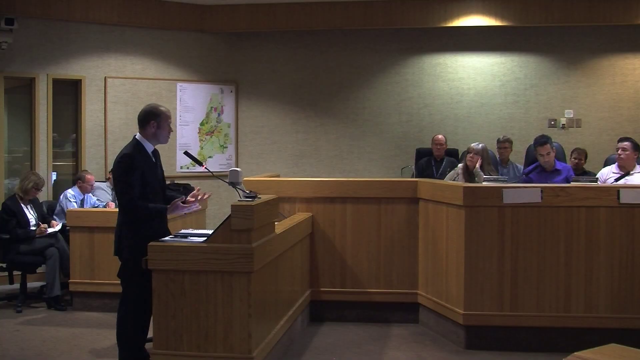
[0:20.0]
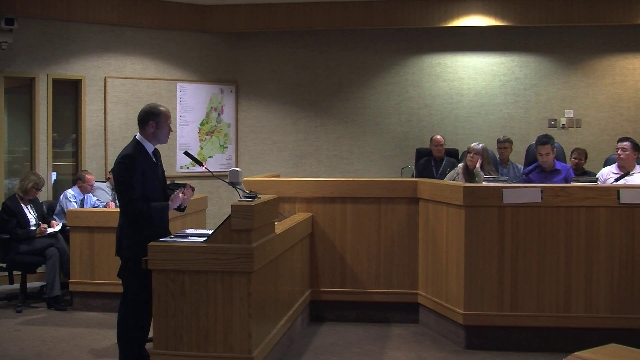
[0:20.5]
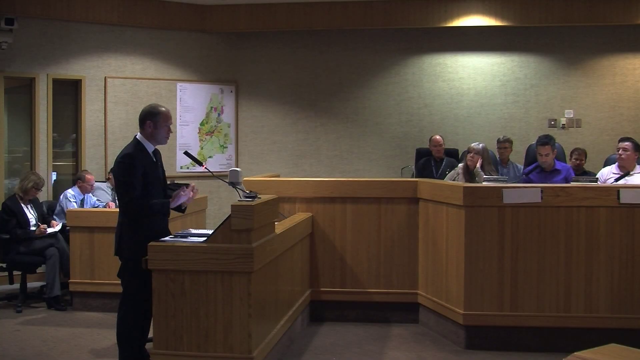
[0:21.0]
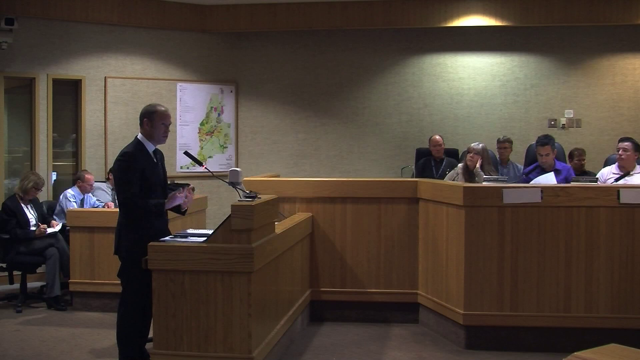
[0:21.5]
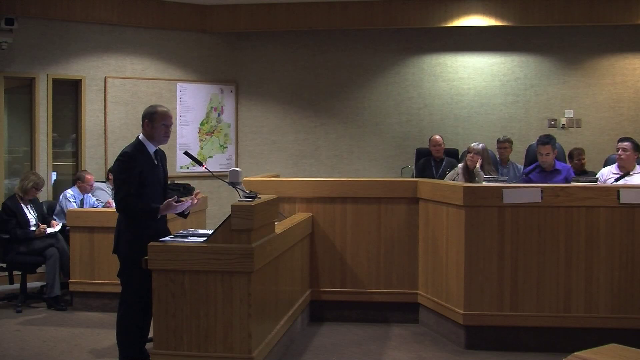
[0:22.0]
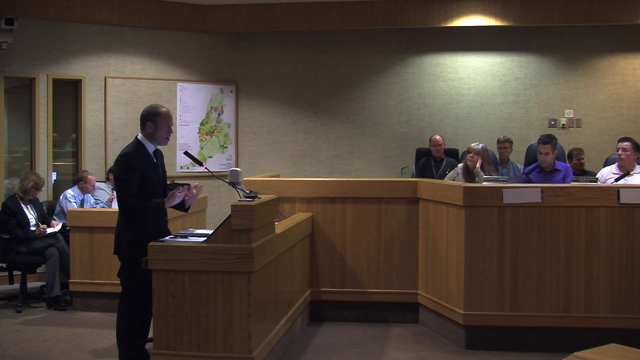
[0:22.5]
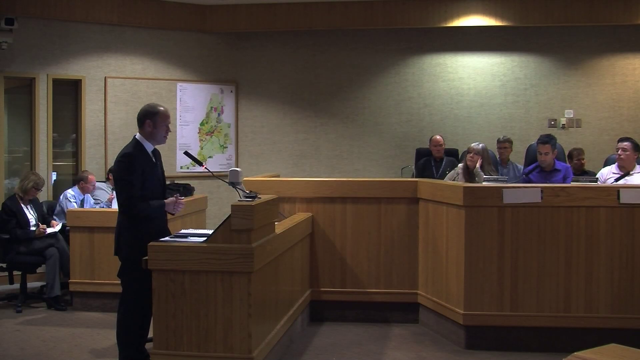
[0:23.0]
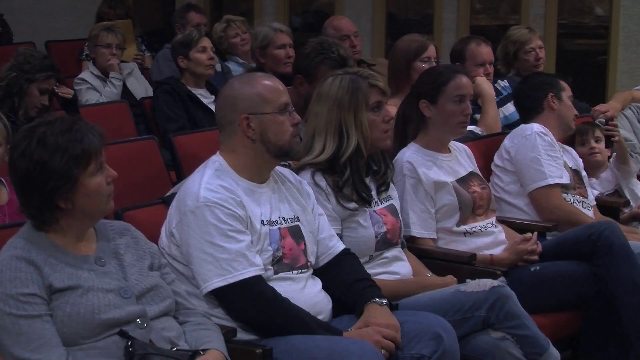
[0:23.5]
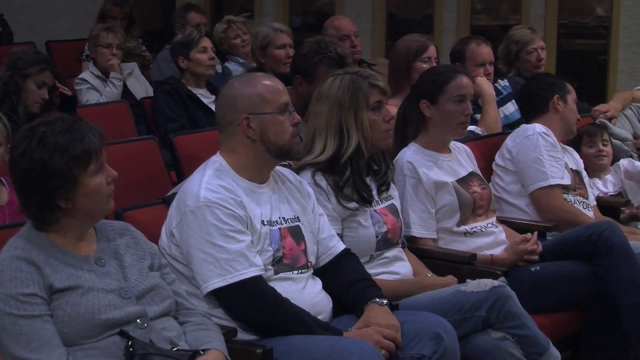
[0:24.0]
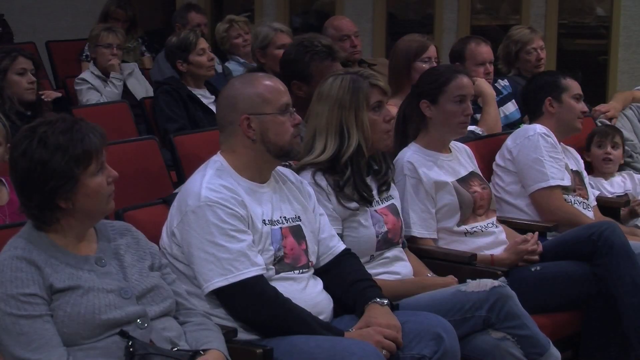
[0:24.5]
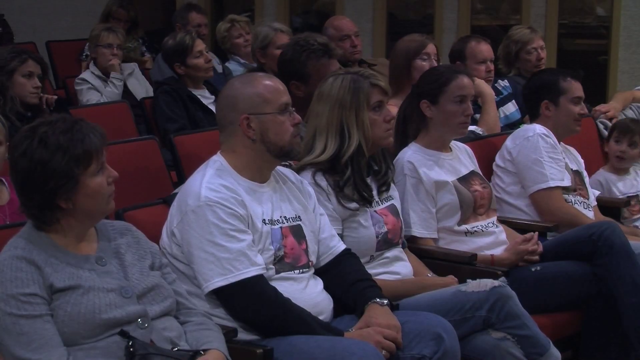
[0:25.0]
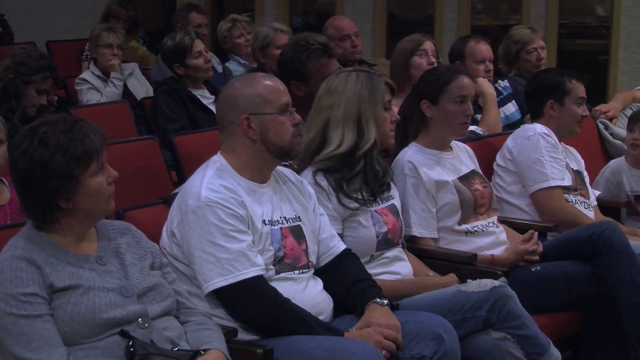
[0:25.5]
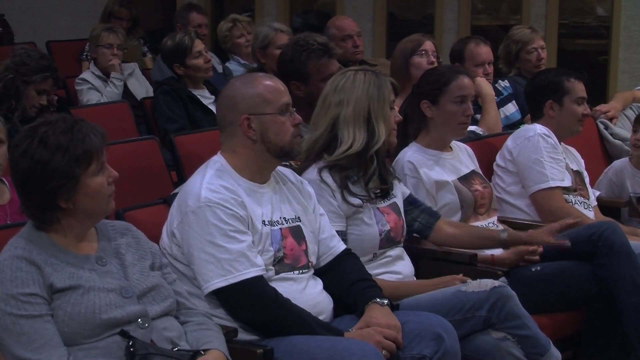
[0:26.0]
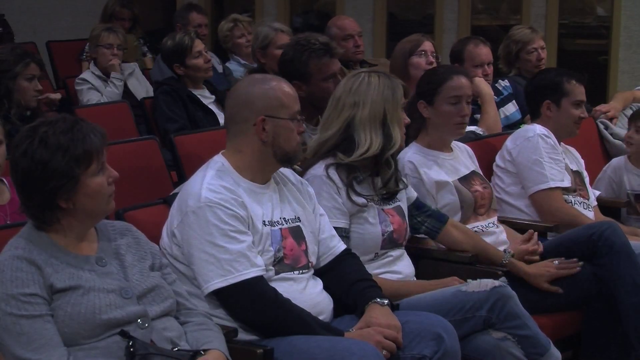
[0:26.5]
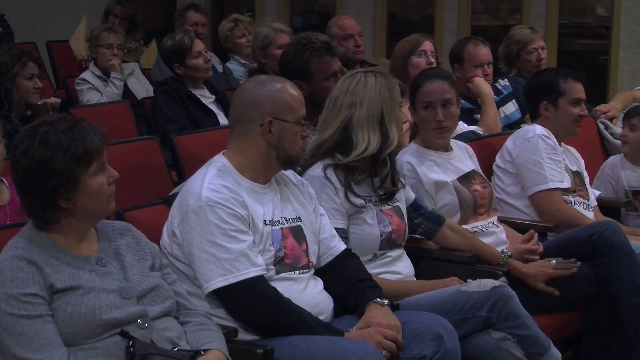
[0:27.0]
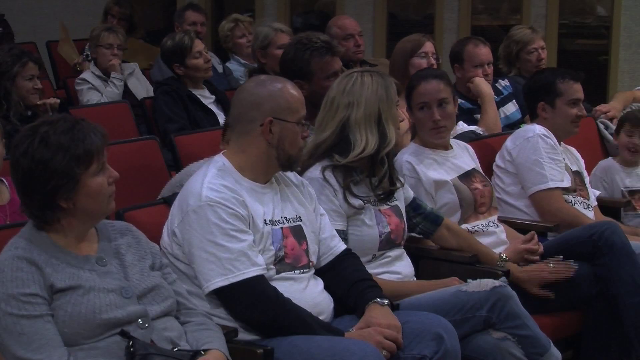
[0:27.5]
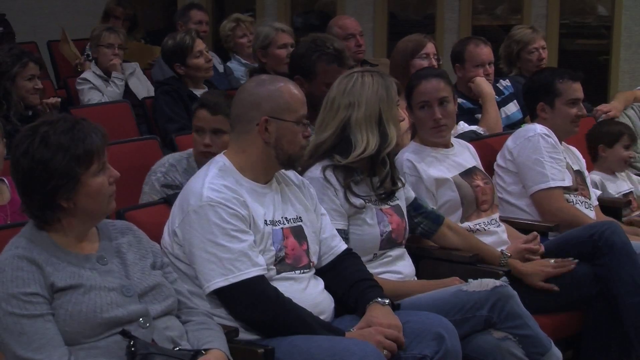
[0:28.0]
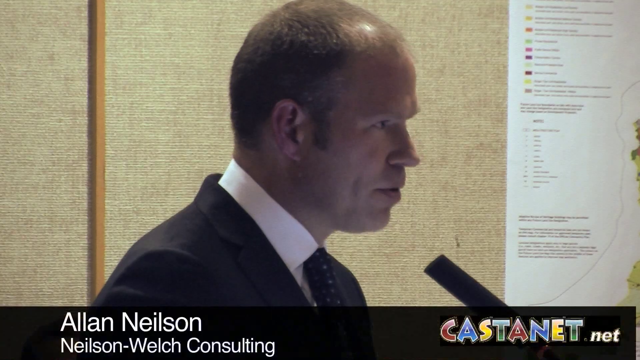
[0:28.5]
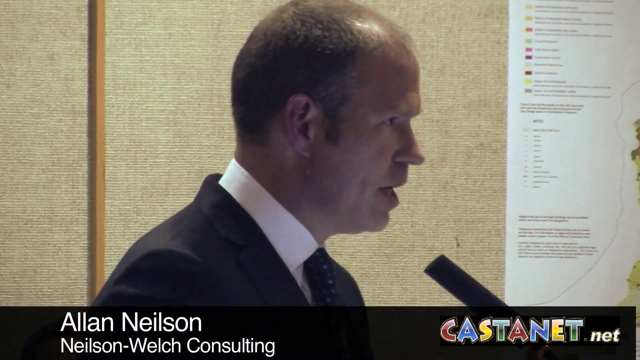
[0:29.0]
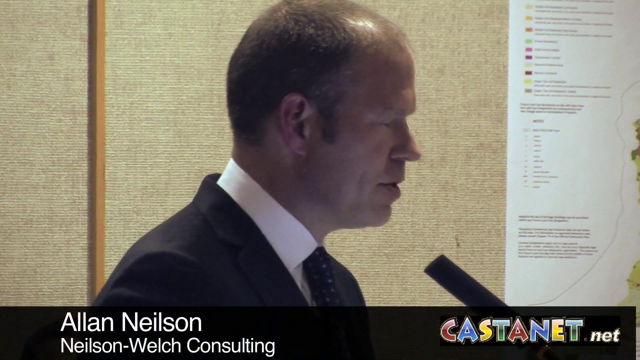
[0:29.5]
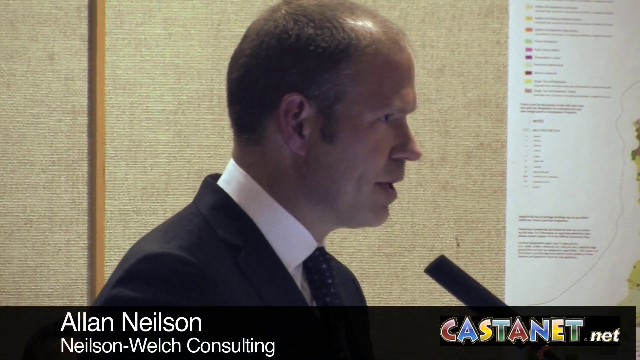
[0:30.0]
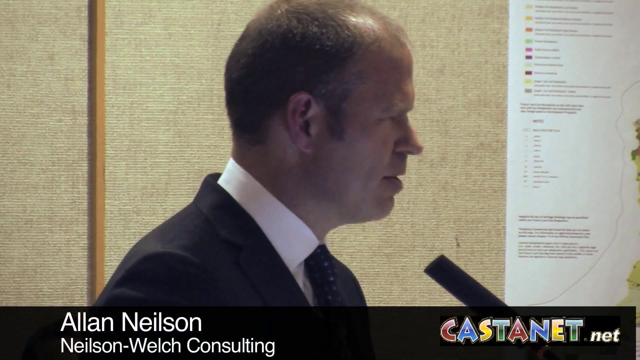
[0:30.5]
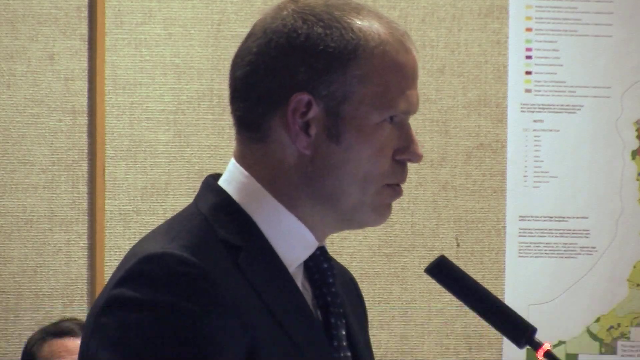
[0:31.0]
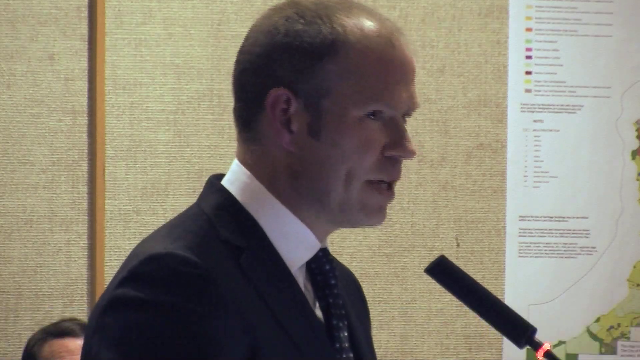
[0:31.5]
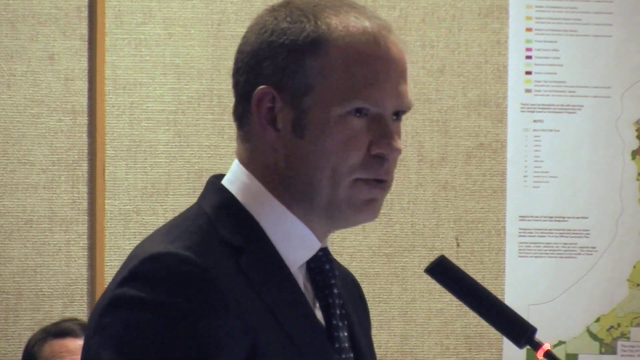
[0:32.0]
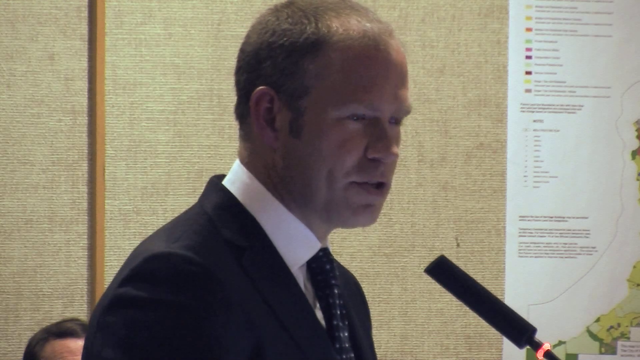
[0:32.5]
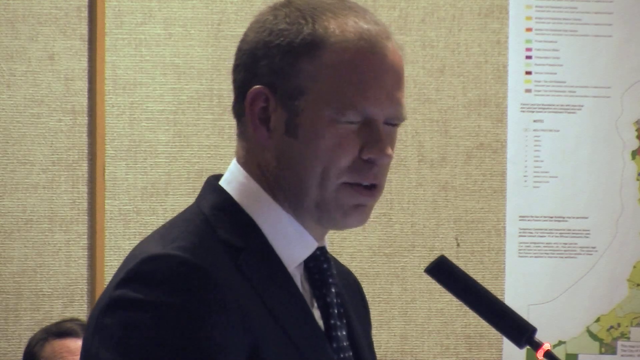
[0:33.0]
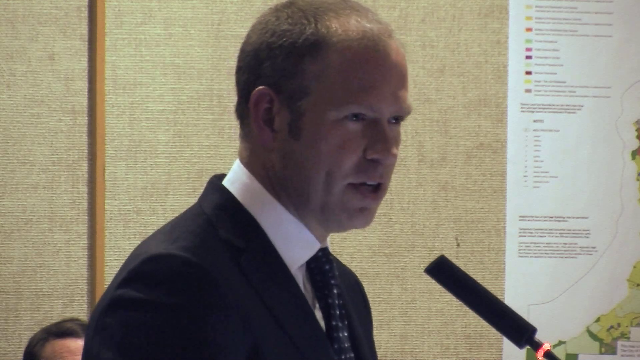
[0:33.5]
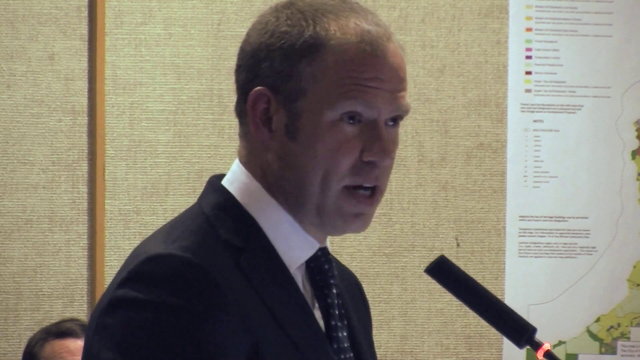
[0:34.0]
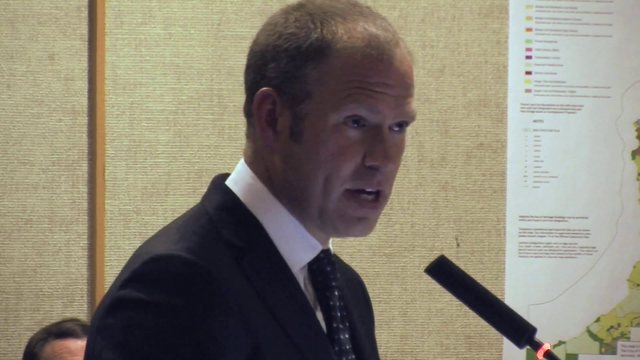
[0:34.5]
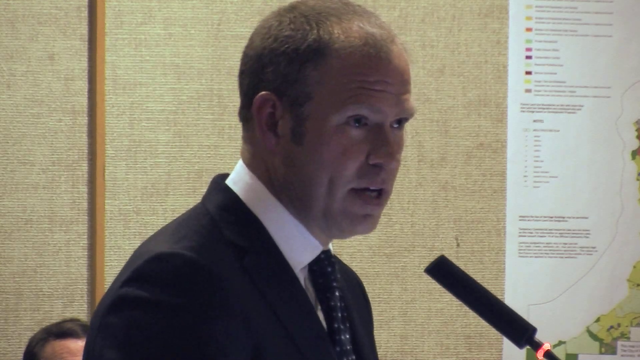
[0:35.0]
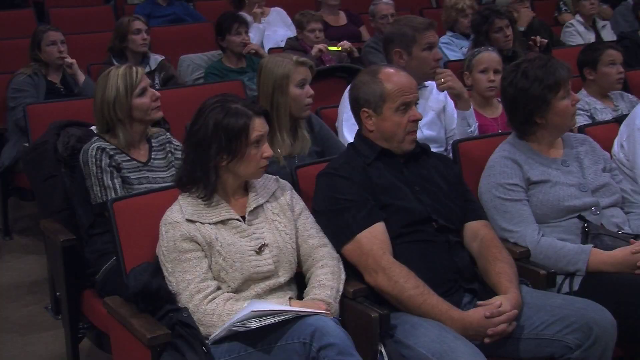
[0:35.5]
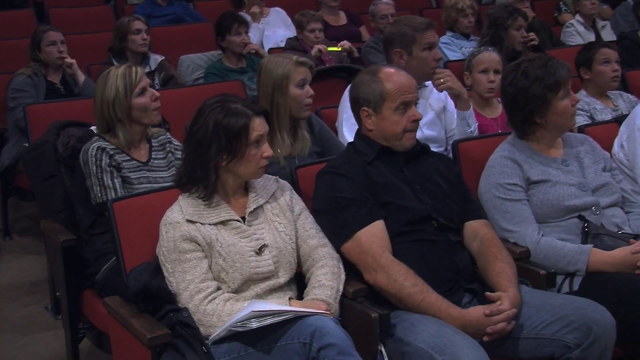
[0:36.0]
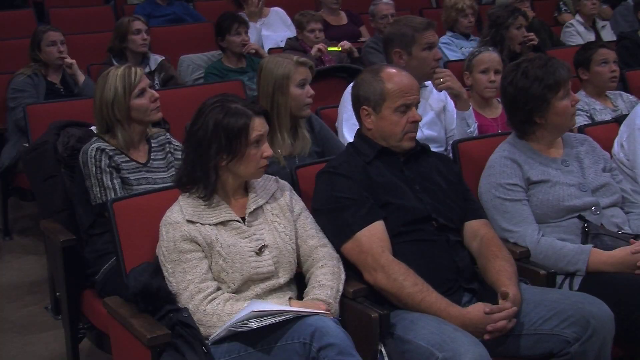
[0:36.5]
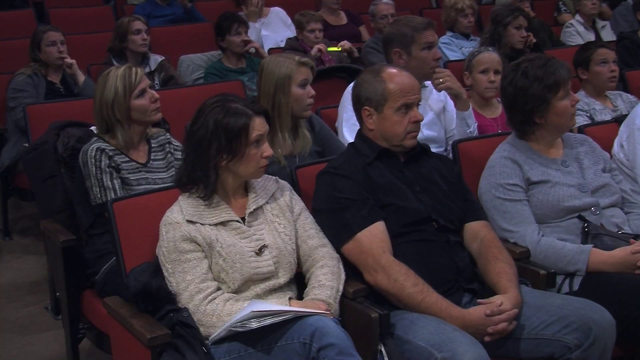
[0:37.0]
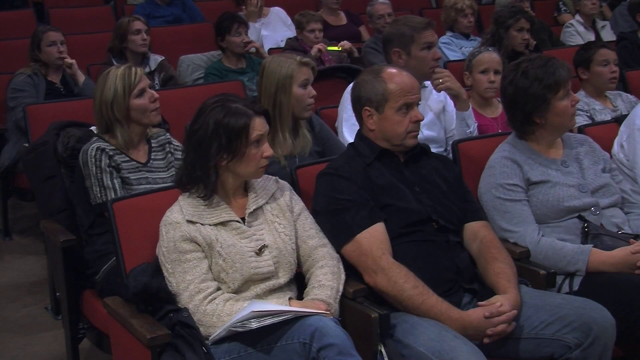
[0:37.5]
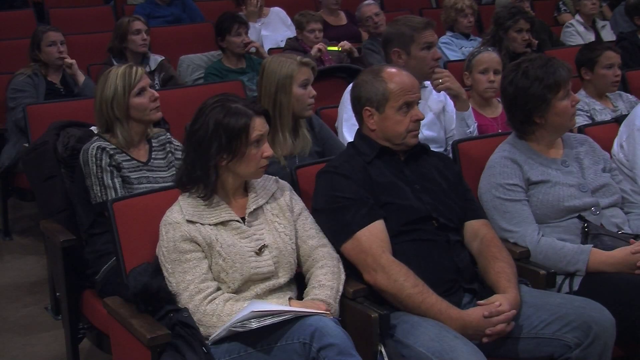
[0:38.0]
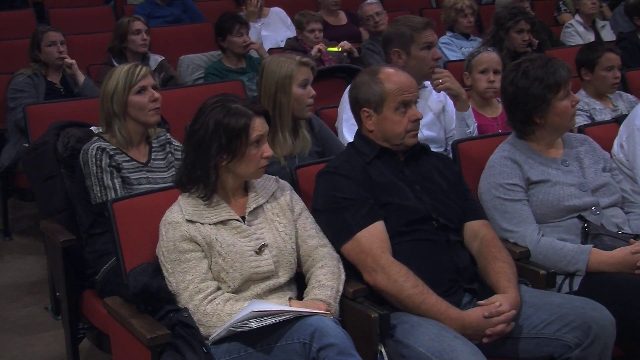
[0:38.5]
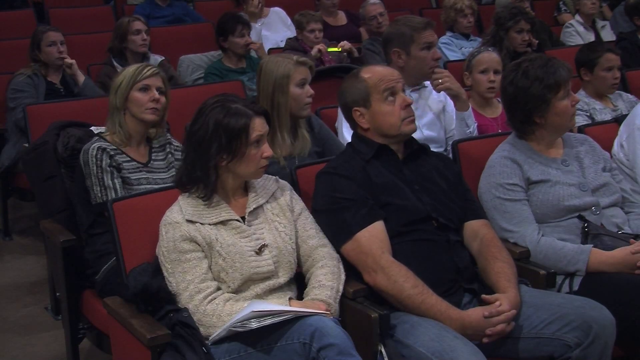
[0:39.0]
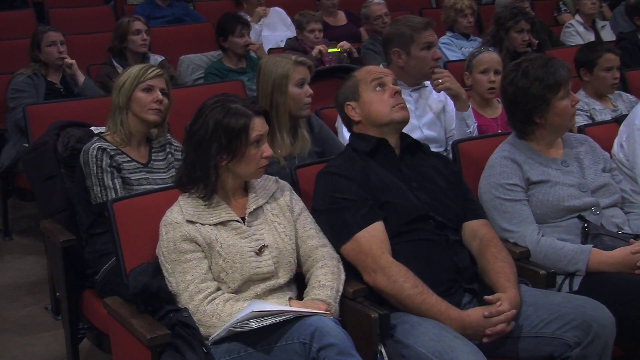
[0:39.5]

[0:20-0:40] A gentleman gives a speech to a group of people. Five of them wear white shirts with a picture of a person on them. The setting is most likely a court hearing. One woman consoles another, who seems distressed. The people present listen attentively, and they range from children to young adults, adults and older people. There are more people on the panel than before.